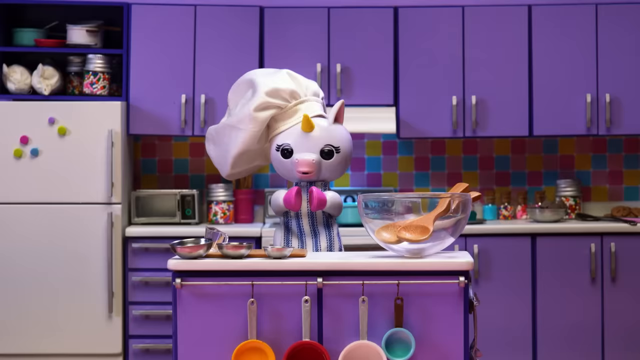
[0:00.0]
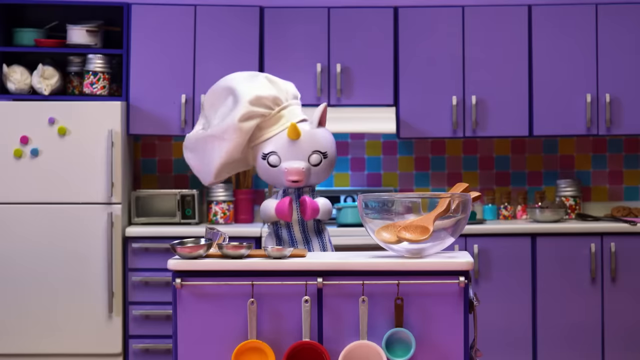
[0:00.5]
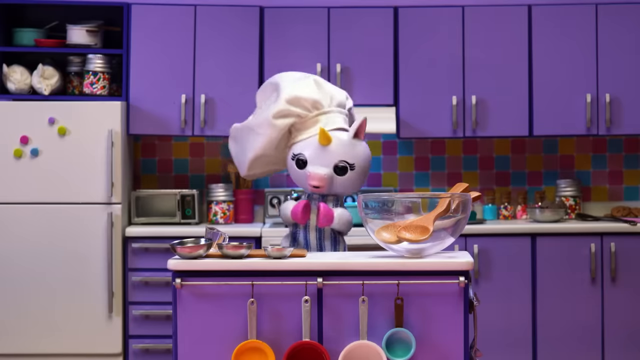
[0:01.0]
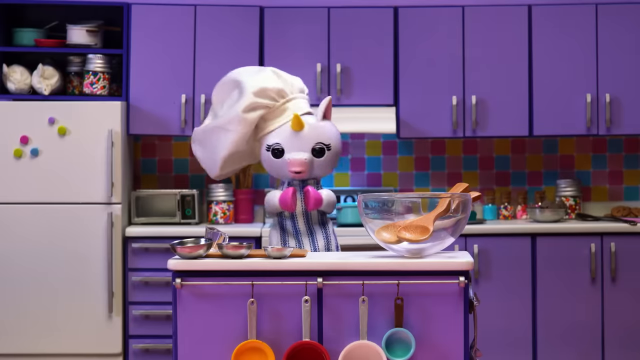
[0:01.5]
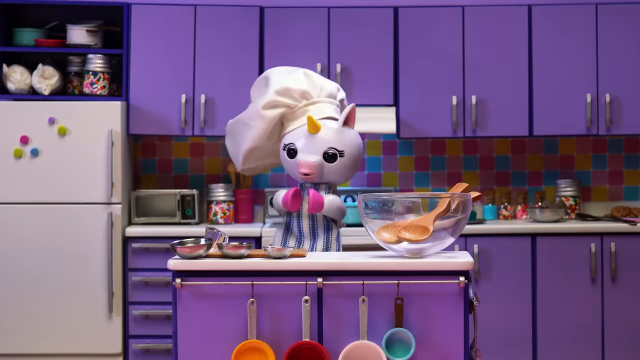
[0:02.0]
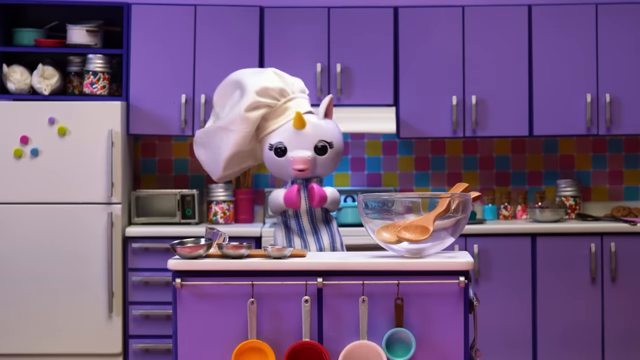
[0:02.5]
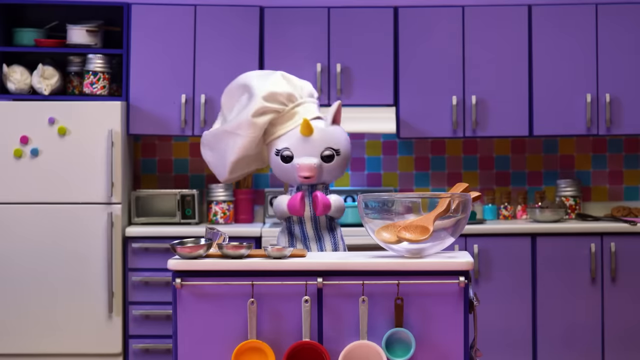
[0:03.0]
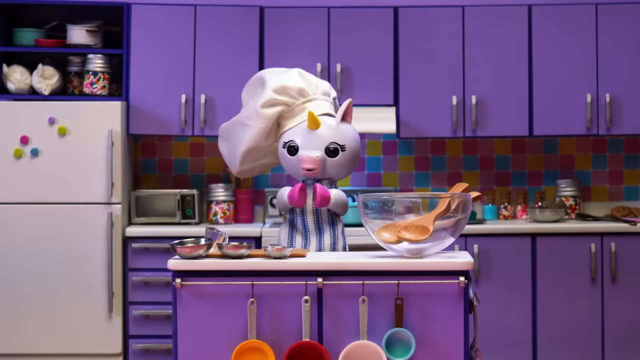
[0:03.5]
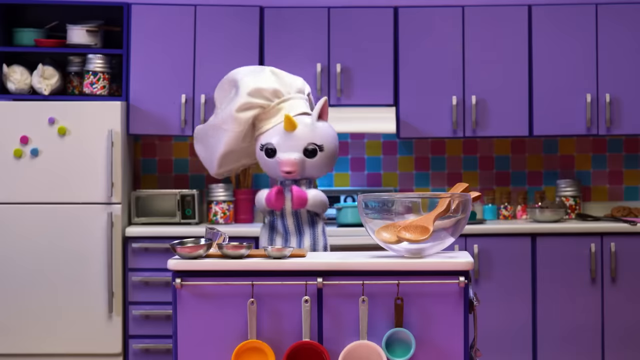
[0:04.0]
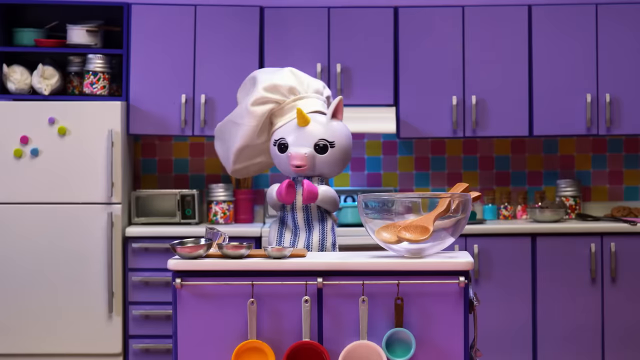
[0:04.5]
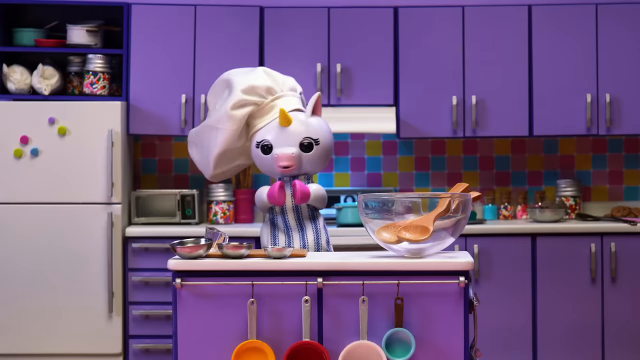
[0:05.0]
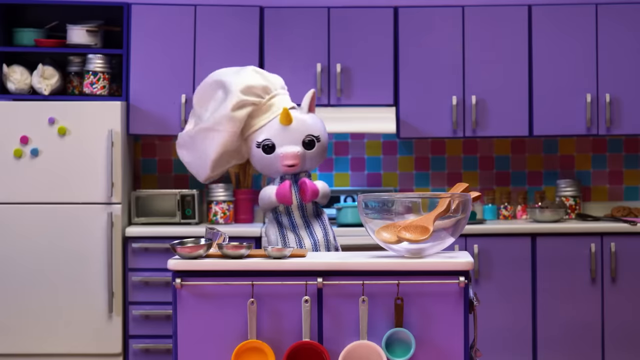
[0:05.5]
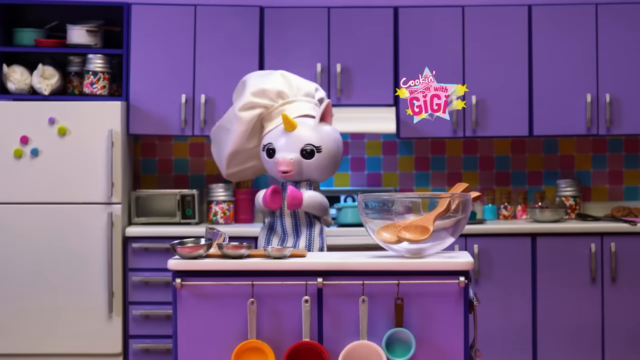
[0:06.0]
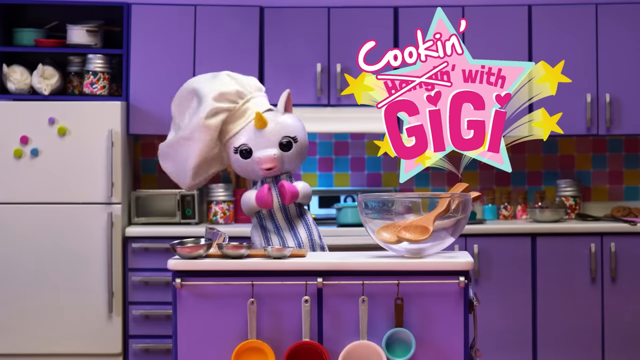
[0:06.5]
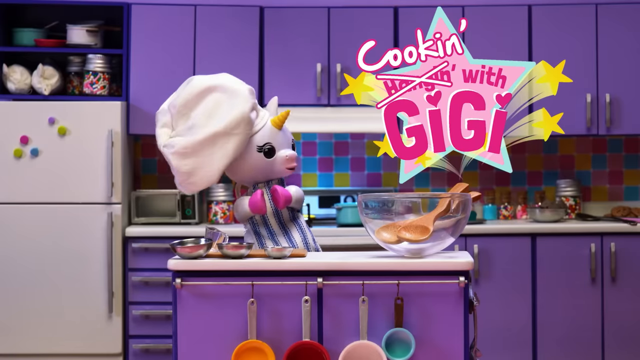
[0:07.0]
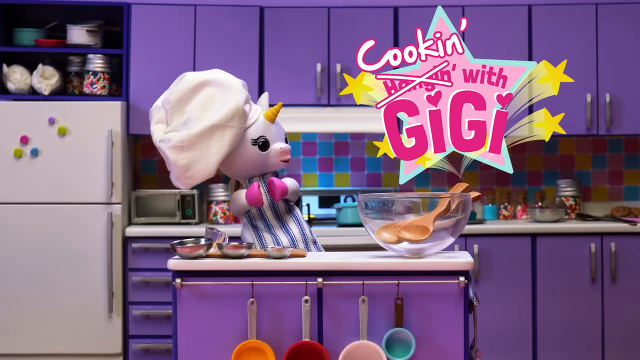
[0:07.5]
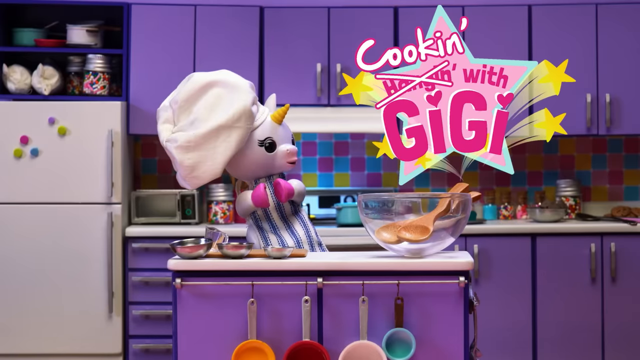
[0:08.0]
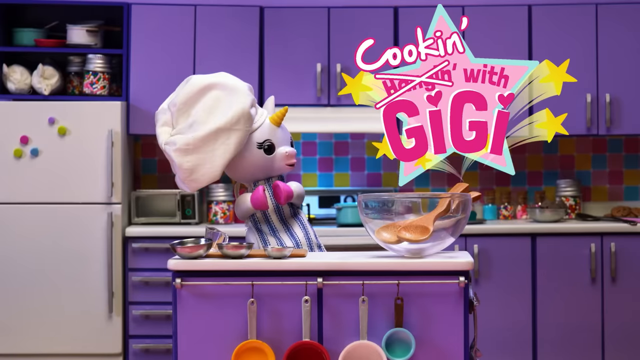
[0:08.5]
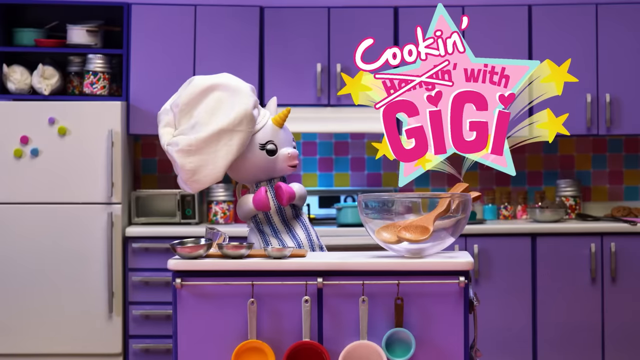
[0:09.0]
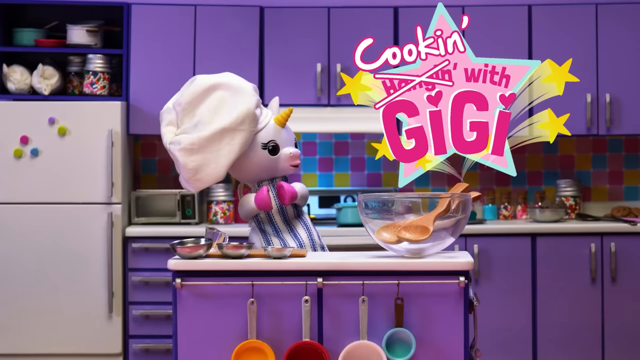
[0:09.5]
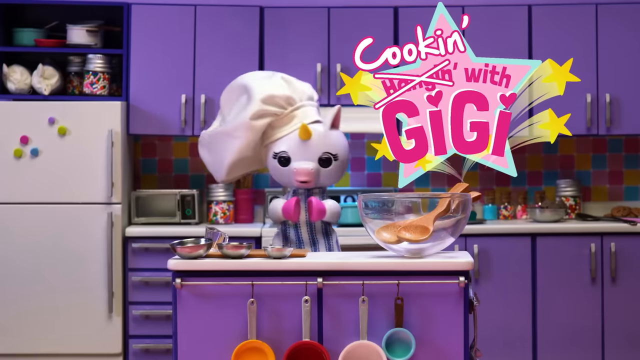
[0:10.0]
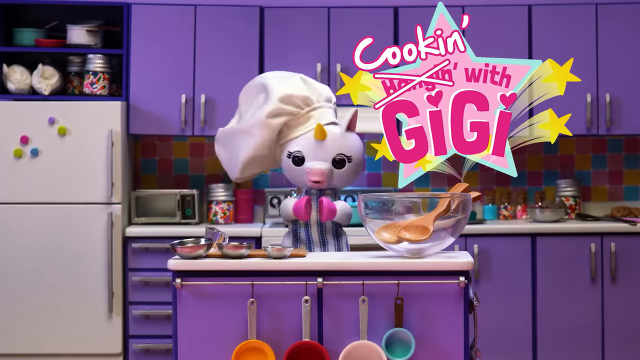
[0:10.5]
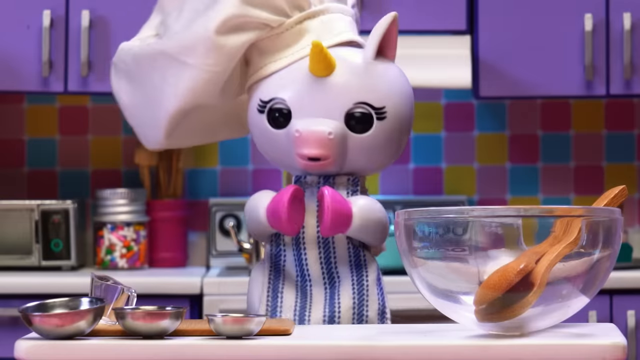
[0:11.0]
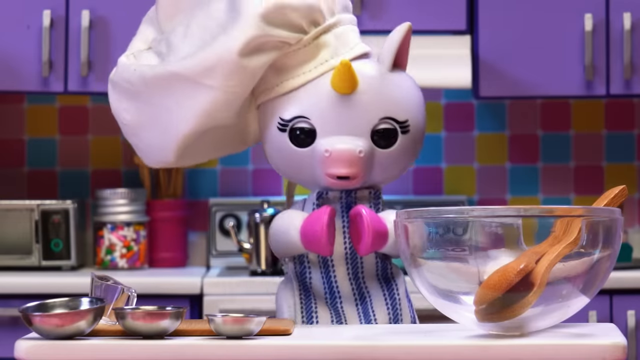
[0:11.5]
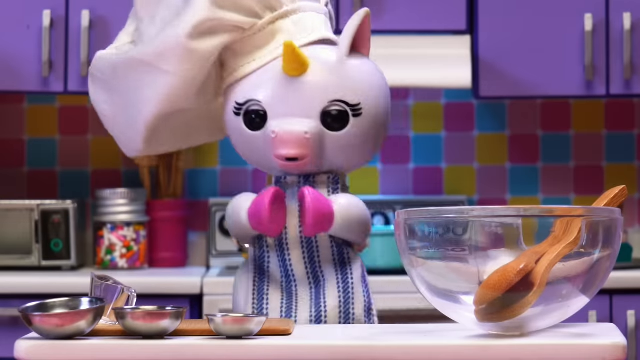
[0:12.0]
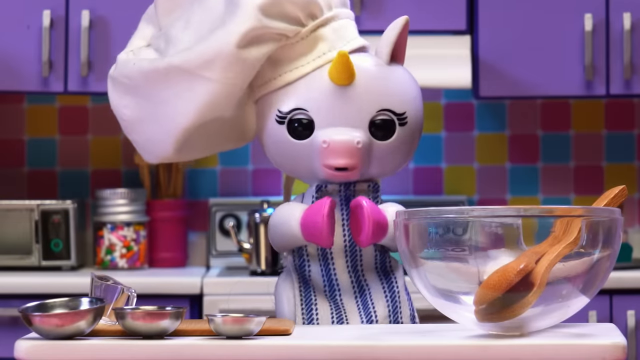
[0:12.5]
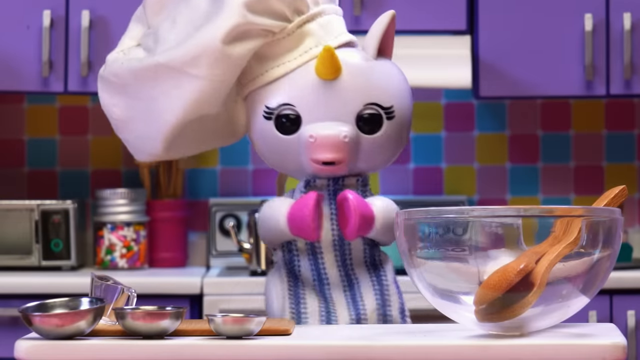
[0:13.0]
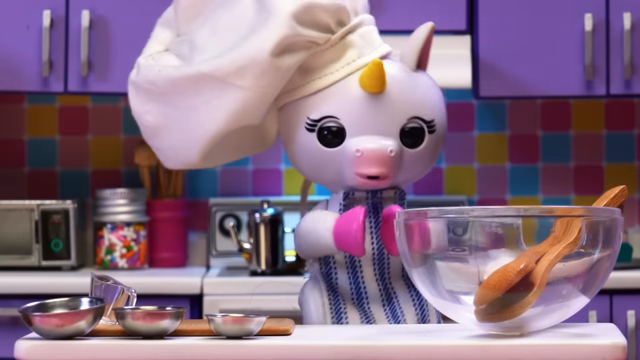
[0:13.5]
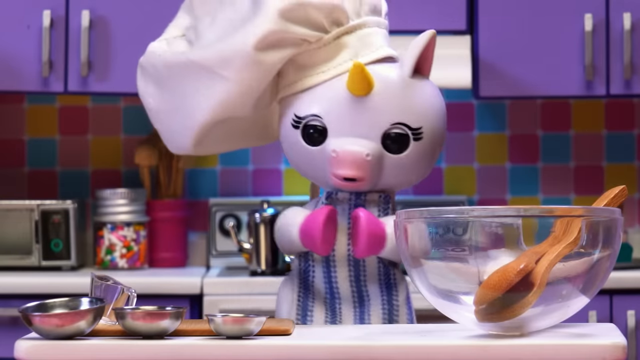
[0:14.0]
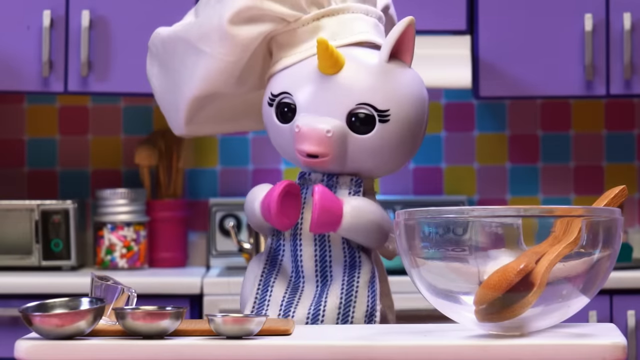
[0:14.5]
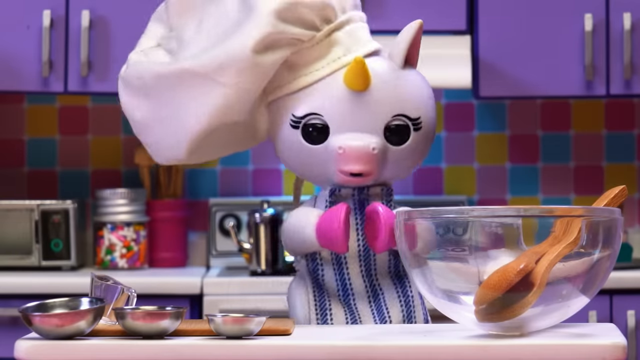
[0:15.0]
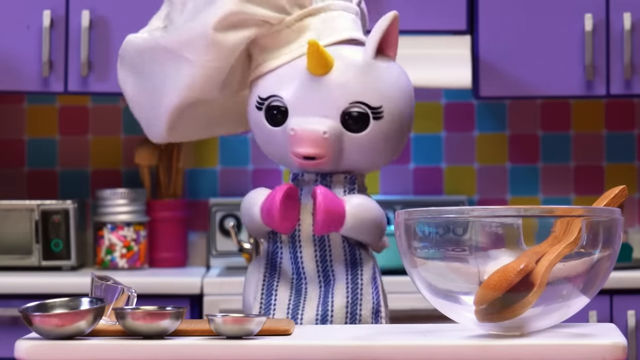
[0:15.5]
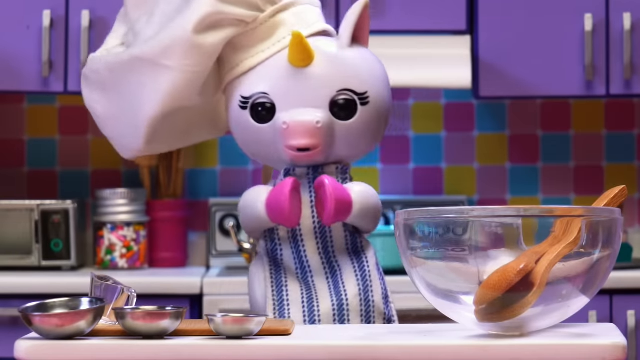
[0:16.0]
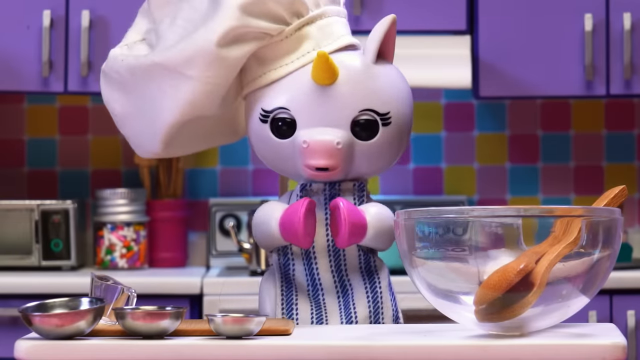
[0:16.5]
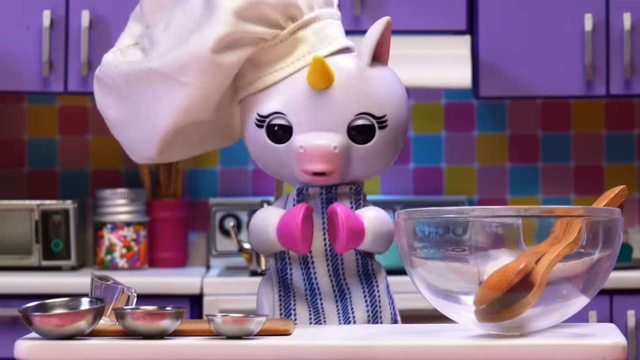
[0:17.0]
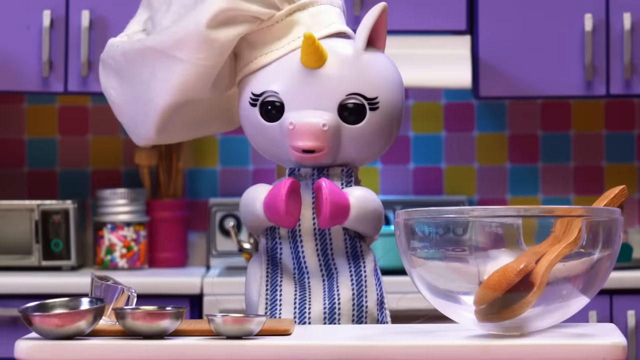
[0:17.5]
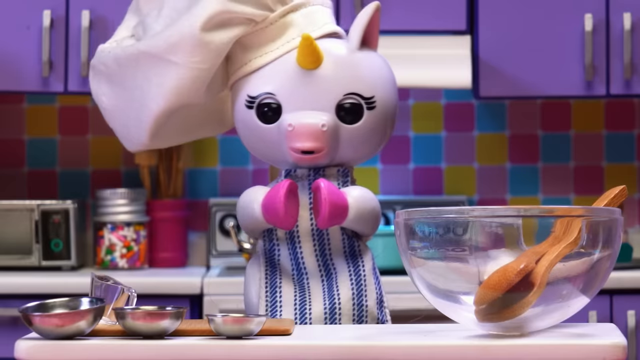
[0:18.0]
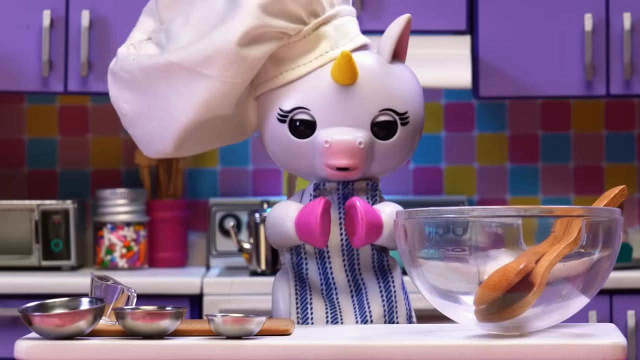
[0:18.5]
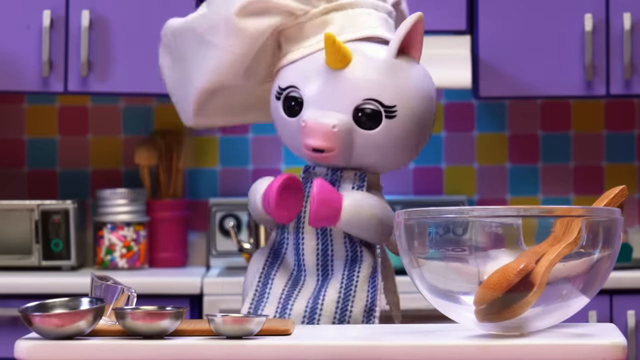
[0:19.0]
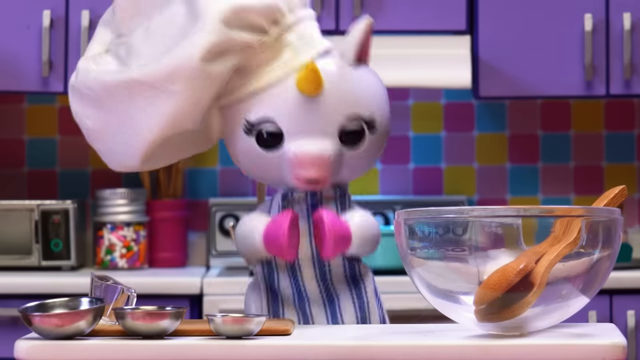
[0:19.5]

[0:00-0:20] A little unicorn toy, which seems to be made of some sort of hard plastic, is the focus of what appears to be a mini cooking video. Her hooves are pink, her horn is yellow, and she wears a chef hat draped over her right ear, on the left side of the screen. In the background there is a white refrigerator with colorful magnets on the freezer, purple cabinets, a toaster oven, a little container of sprinkles, a bowl, and various other things on the counters. On the kitchen island are a glass bowl with two spoons and some metal bowls that she will probably use for the cooking. Something like a title logo appears: a star with shooting stars and the words "hangin' with Gigi". "Hangin'" is crossed out in white and replaced by "cookin'". The camera moves to a closer shot of the unicorn, who moves and blinks and could be talking, then pans back out to the full image.